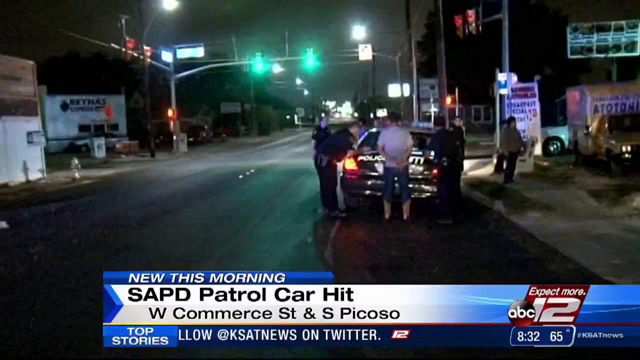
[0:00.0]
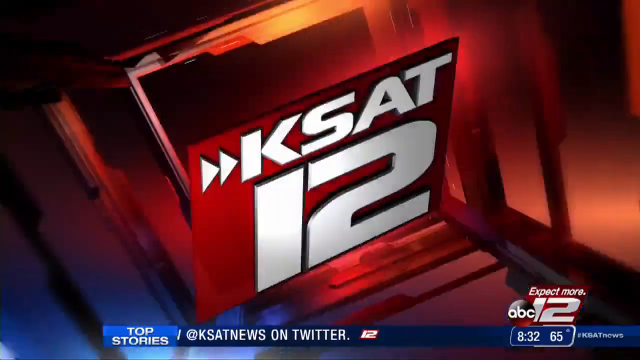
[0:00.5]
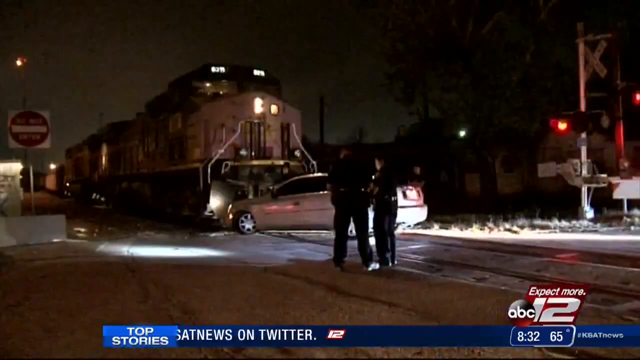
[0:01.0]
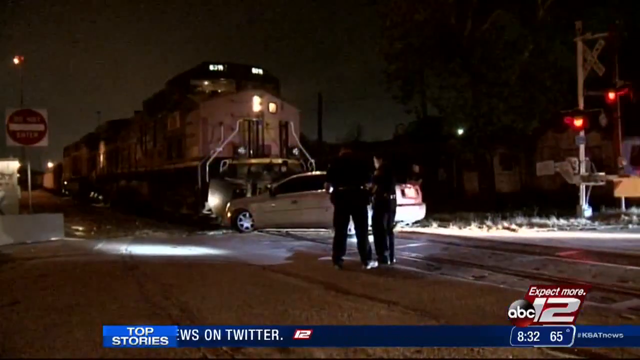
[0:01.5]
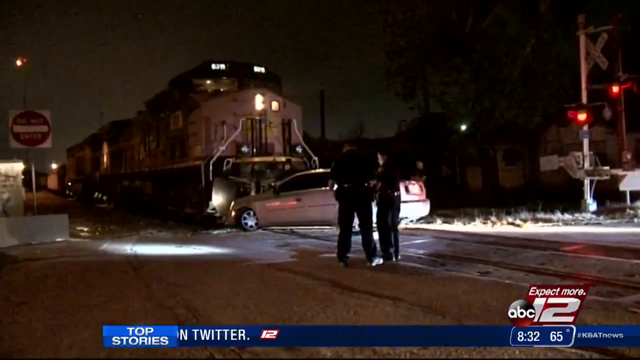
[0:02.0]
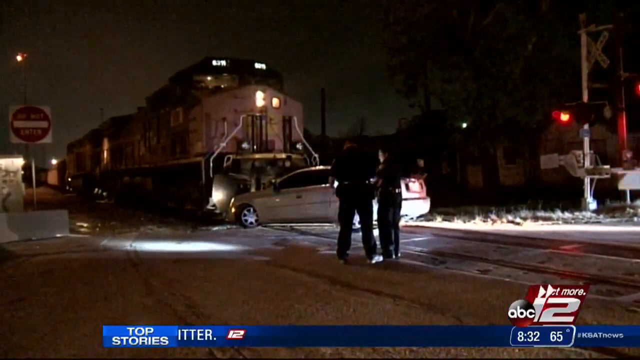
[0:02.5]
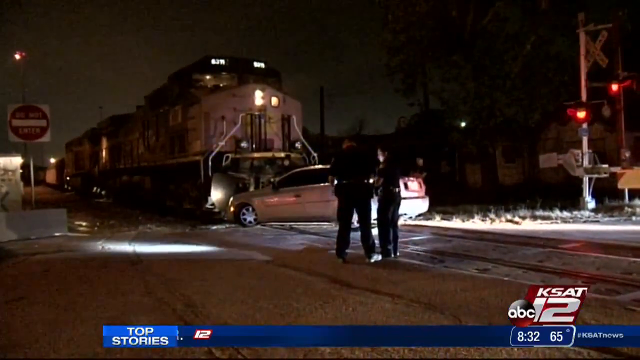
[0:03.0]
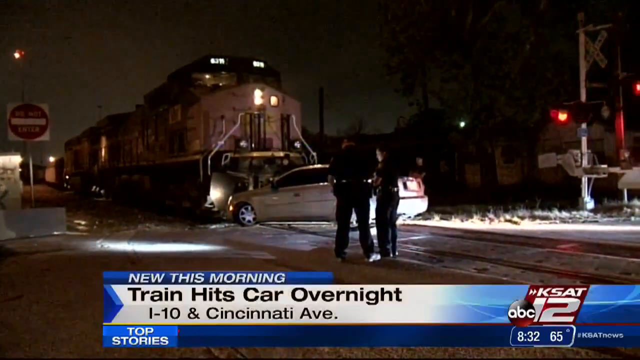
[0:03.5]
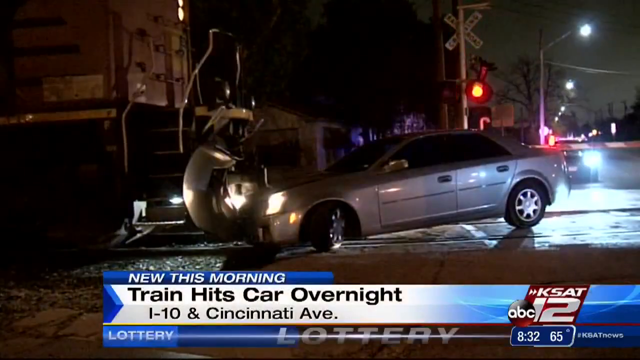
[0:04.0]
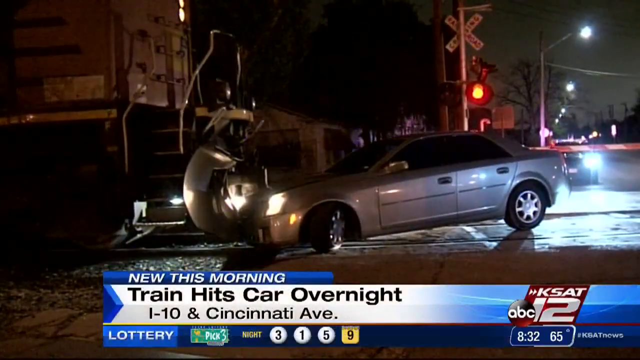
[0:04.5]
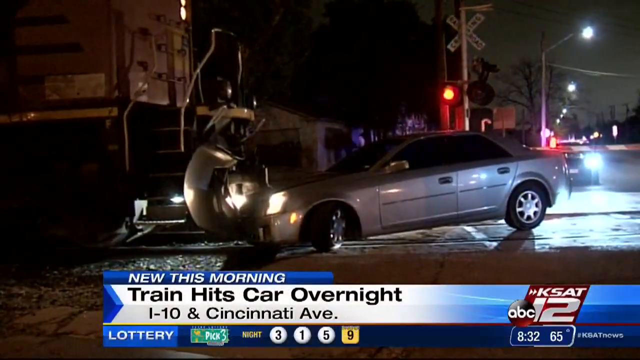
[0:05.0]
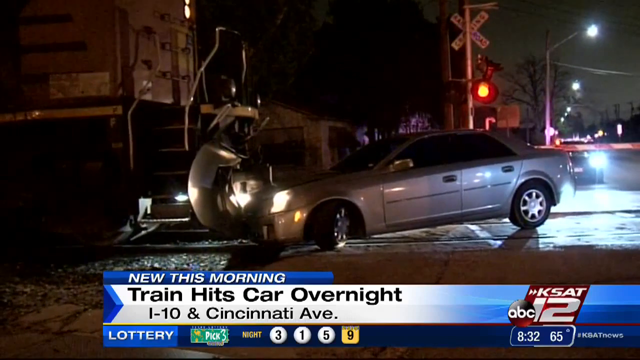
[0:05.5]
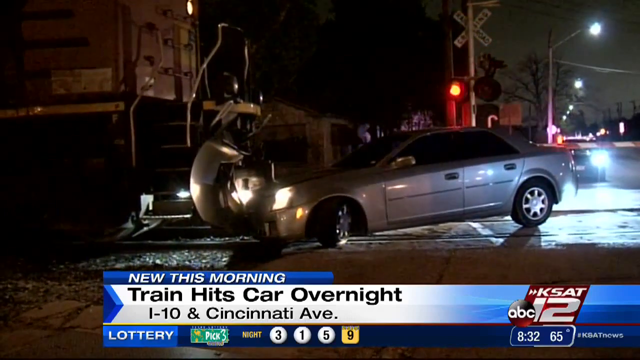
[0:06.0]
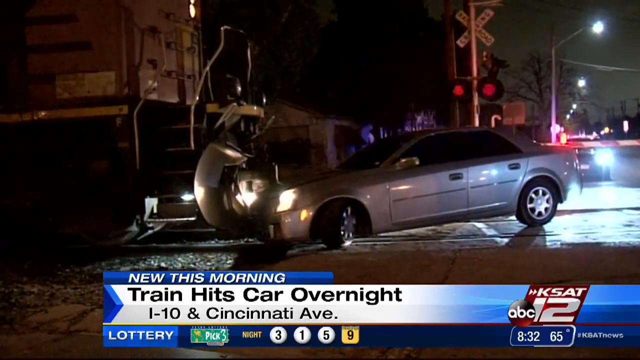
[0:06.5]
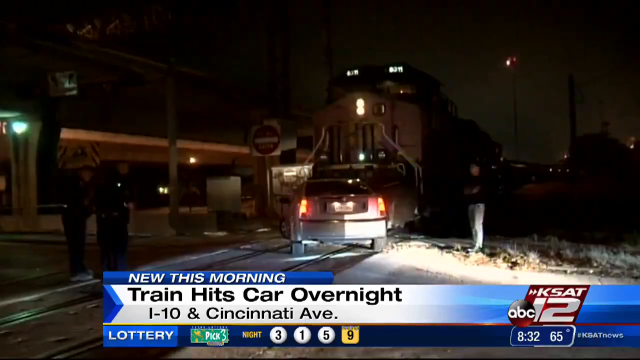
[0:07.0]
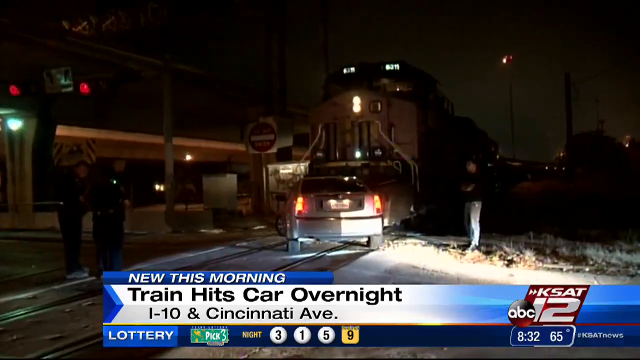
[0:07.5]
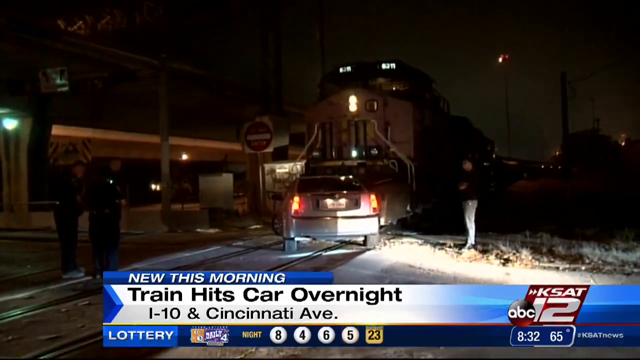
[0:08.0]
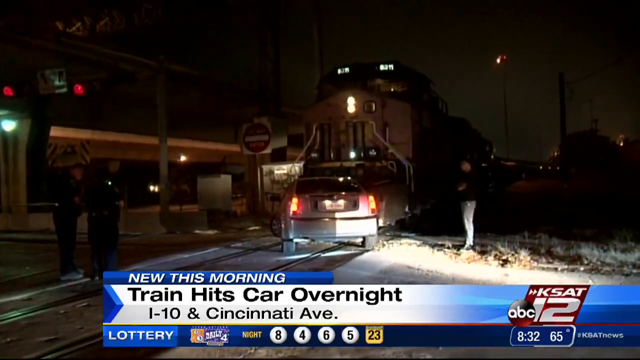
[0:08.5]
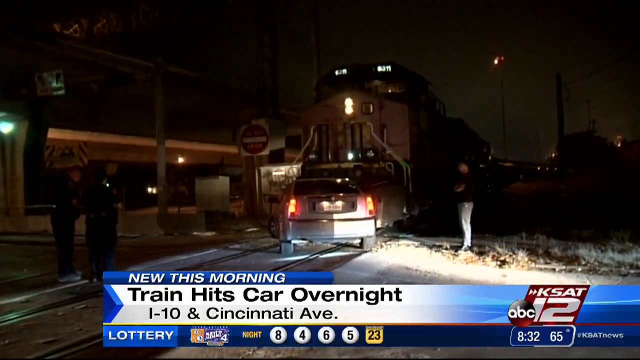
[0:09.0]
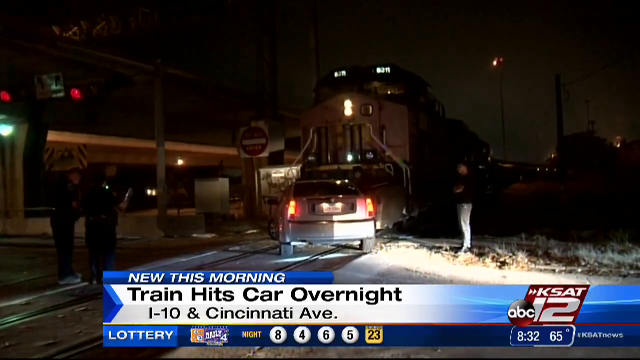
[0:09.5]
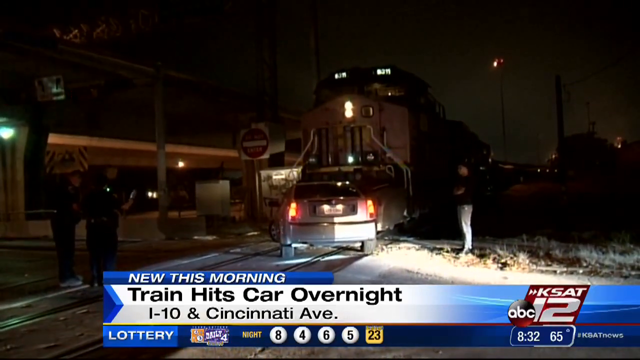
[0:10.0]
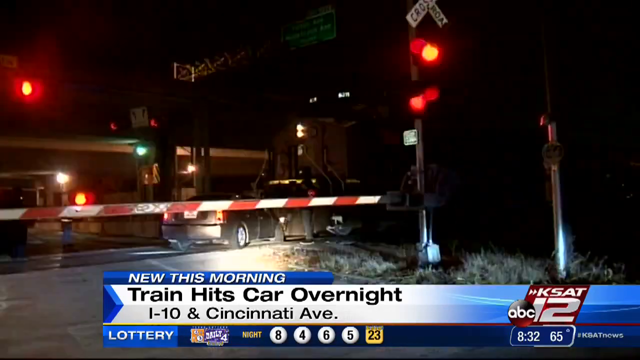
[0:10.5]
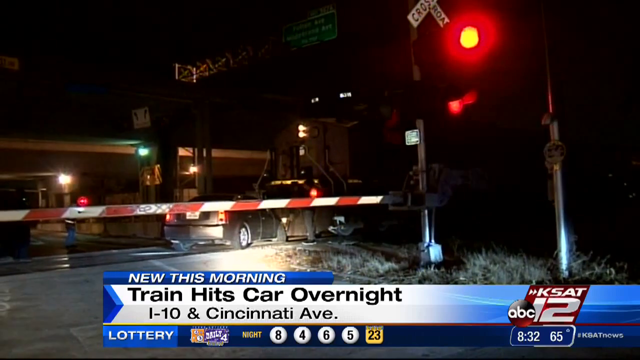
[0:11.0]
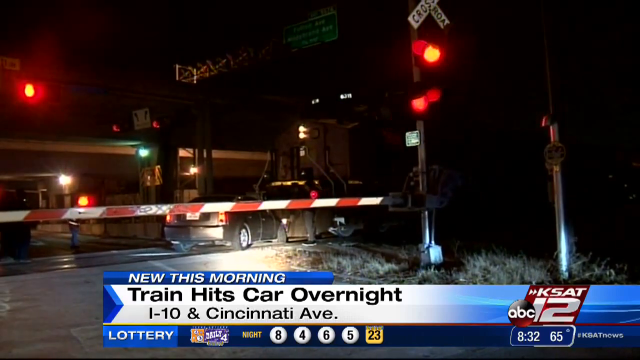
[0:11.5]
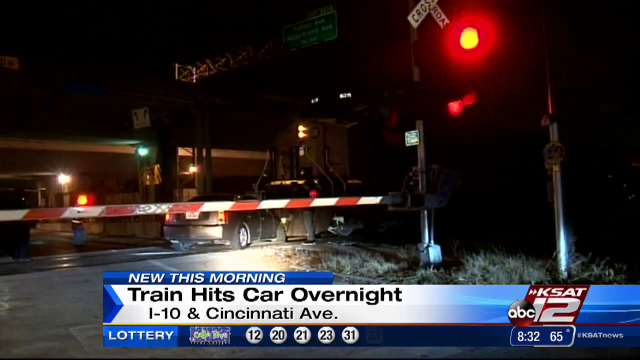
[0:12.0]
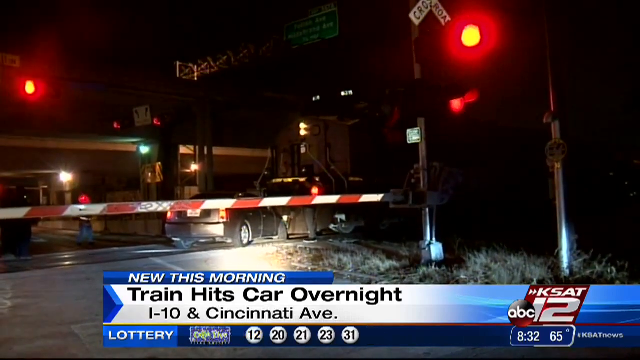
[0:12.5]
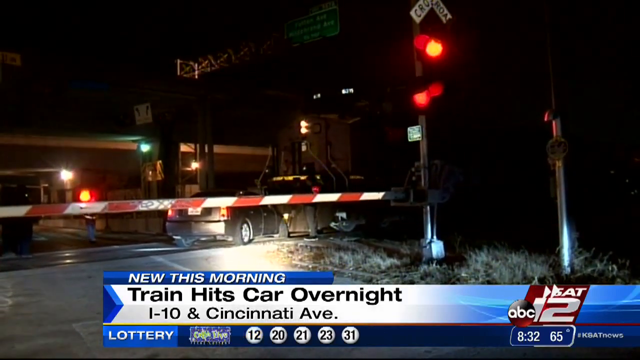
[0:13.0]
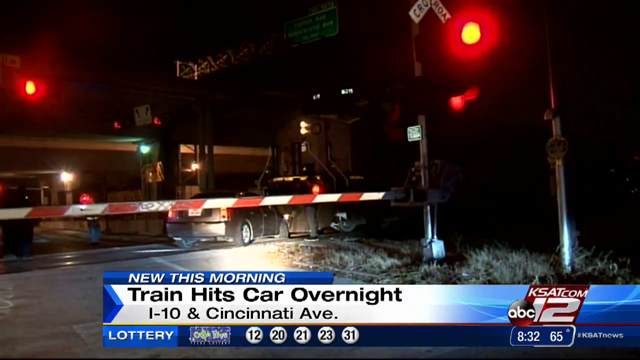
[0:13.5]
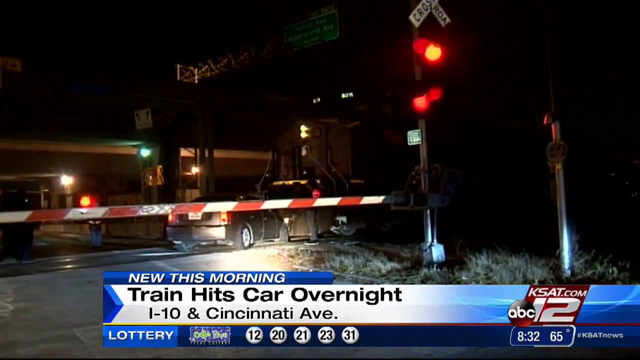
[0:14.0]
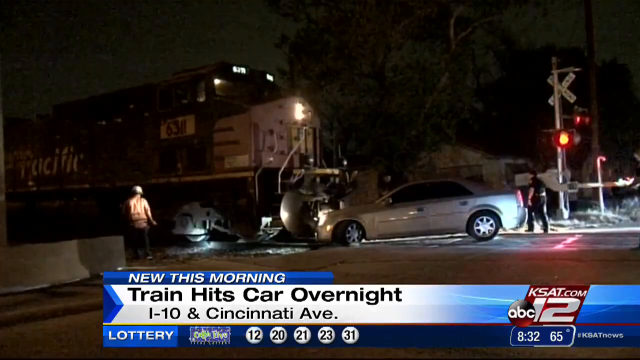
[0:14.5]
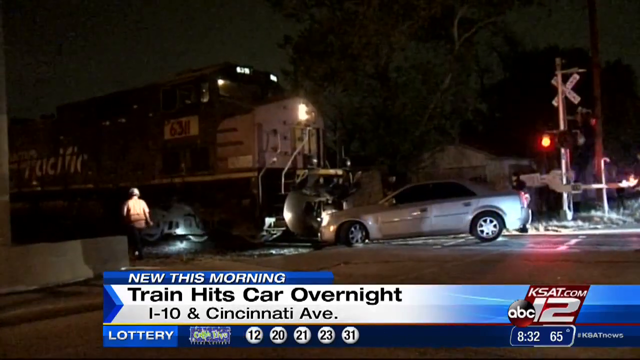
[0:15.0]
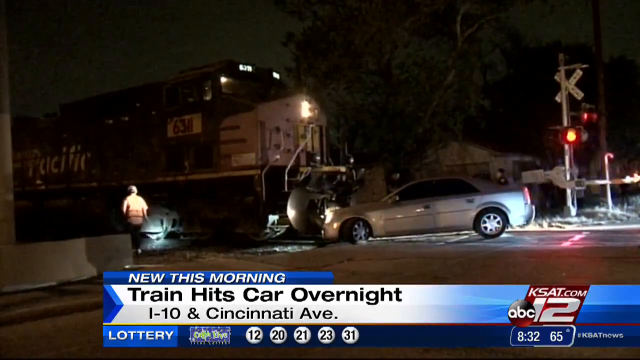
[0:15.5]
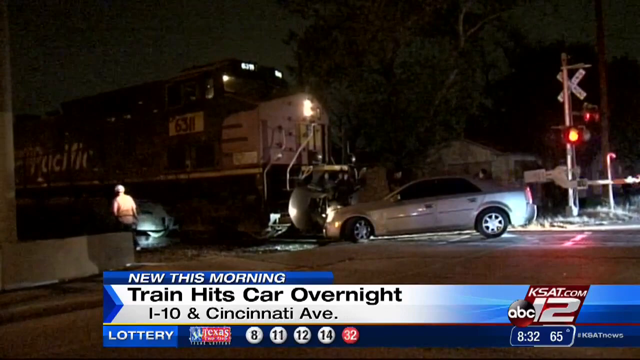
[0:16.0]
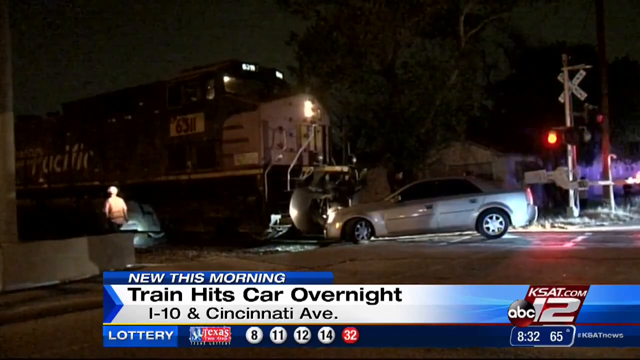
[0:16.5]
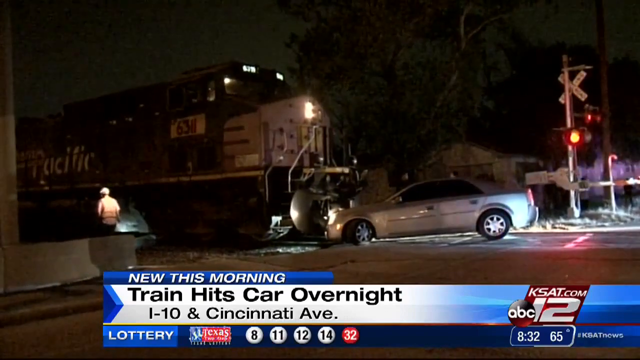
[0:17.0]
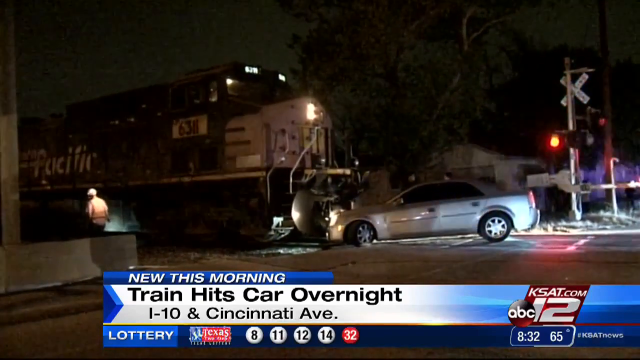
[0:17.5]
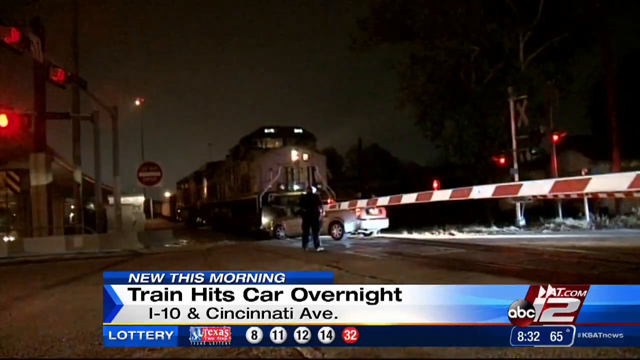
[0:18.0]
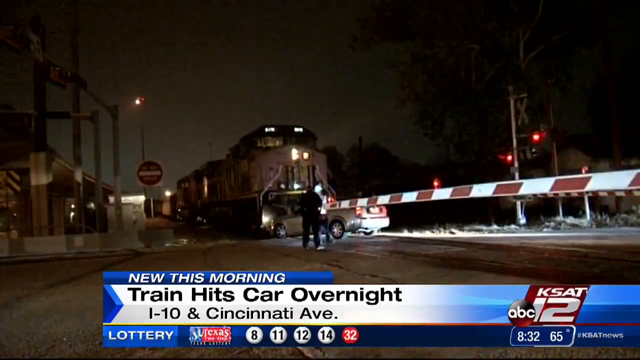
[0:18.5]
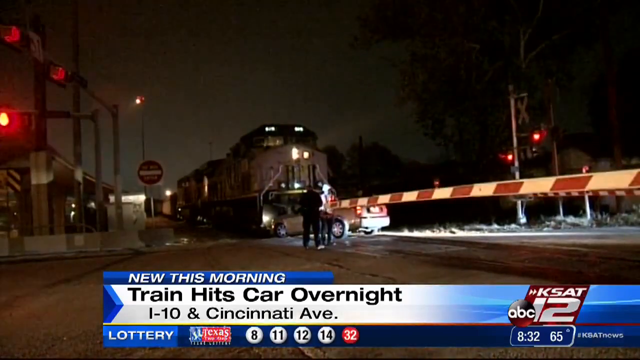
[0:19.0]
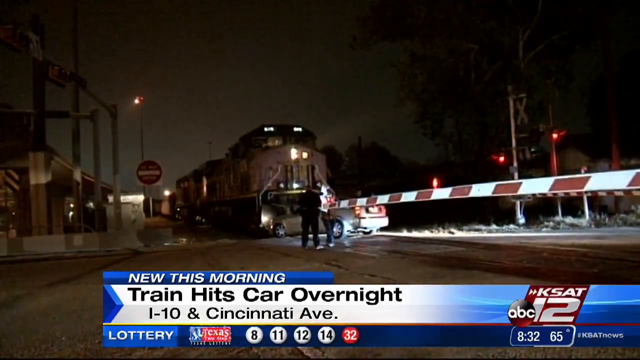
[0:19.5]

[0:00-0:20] The video opens on a police car, then changes to a news story about a car that was hit by a train. It is nighttime, so the scene is dark and hard to see, and two people are standing outside. On the right-hand side, train lights are flashing for people to stop, and on the left-hand side there is a sign that says "Do Not Enter." A closer shot shows the car that was hit by the train, with a banner that says "New this morning, train hits car overnight, I-10 and Cincinnati Avenue." Emergency lights are visible in the background. Another shot shows the train, followed by a shot of the red and white sign and the bar that comes down to signal that a train is coming and to stop. A train crossing sign is blinking on the right-hand side. Multiple people then walk around the accident.